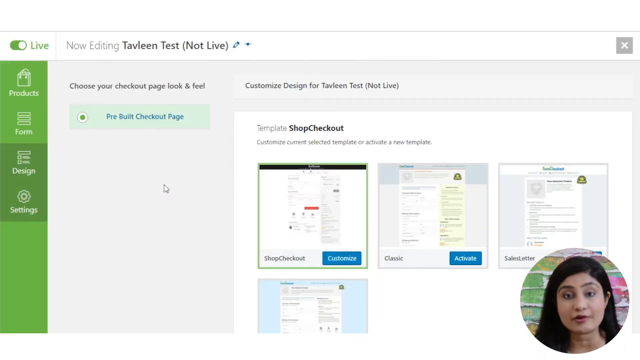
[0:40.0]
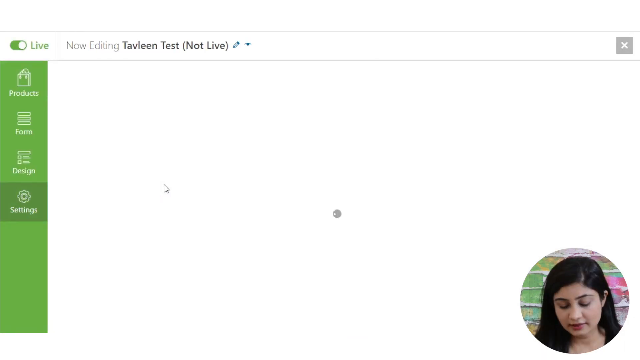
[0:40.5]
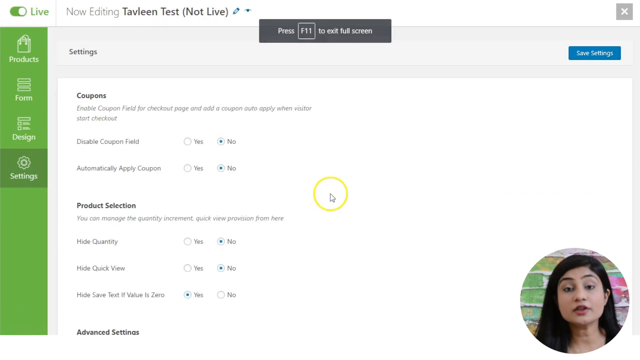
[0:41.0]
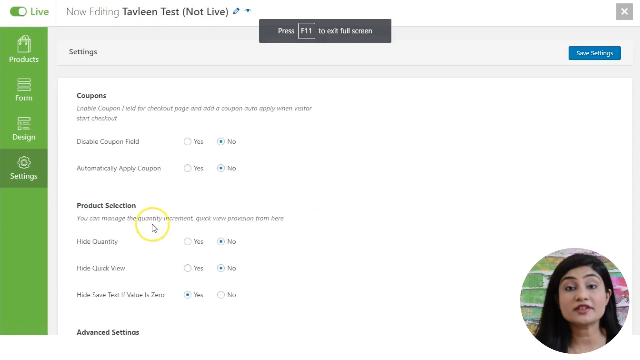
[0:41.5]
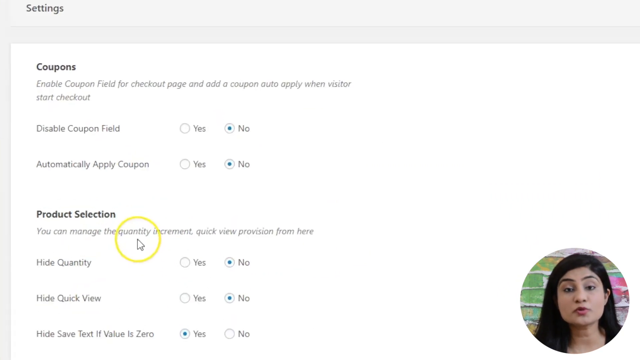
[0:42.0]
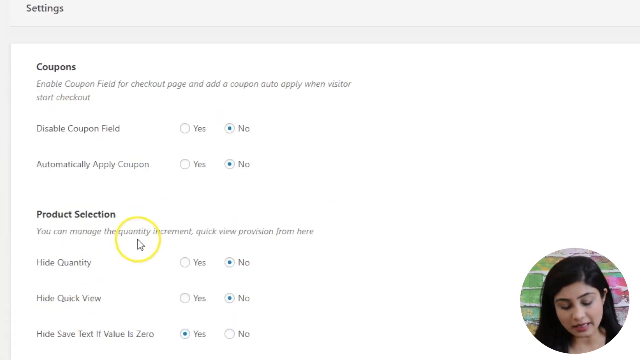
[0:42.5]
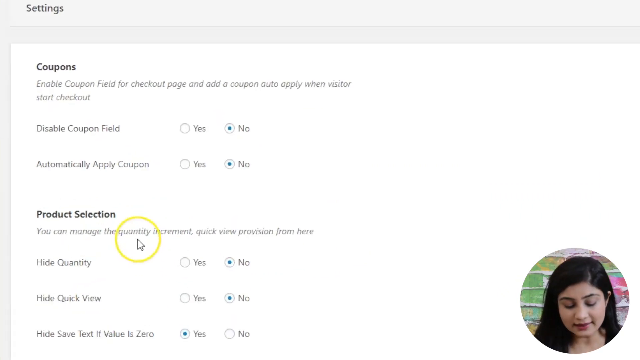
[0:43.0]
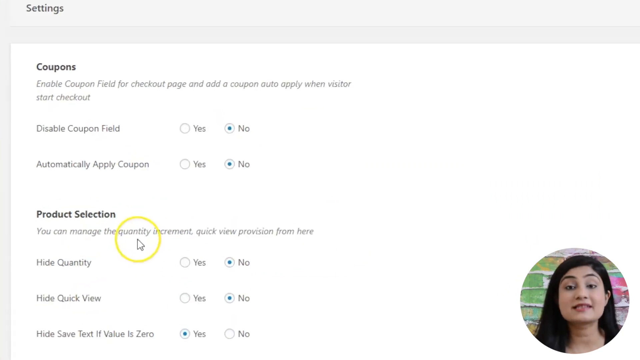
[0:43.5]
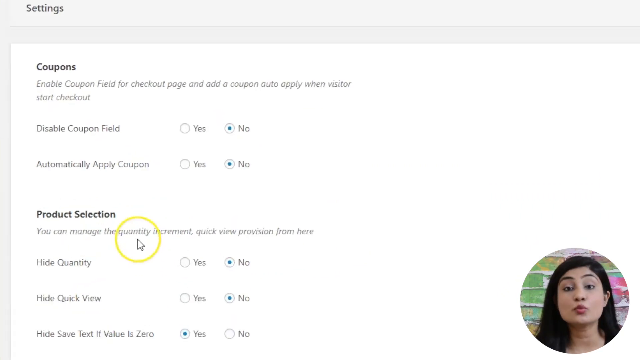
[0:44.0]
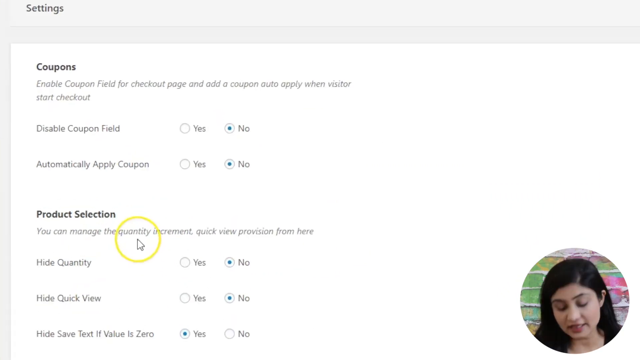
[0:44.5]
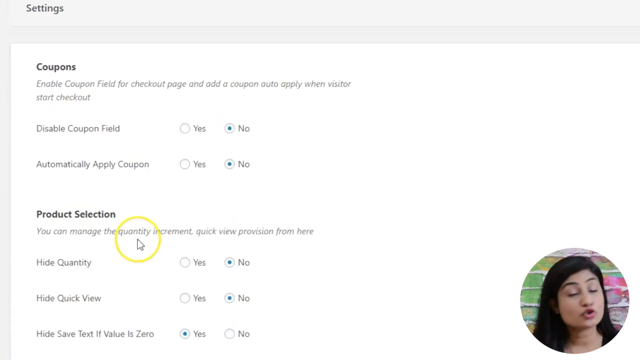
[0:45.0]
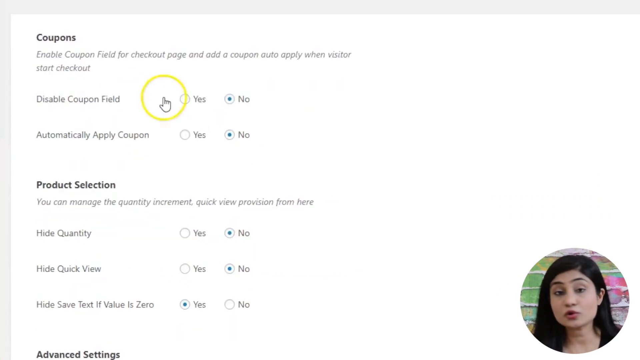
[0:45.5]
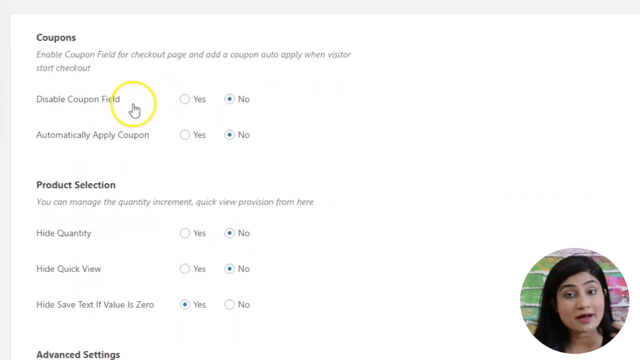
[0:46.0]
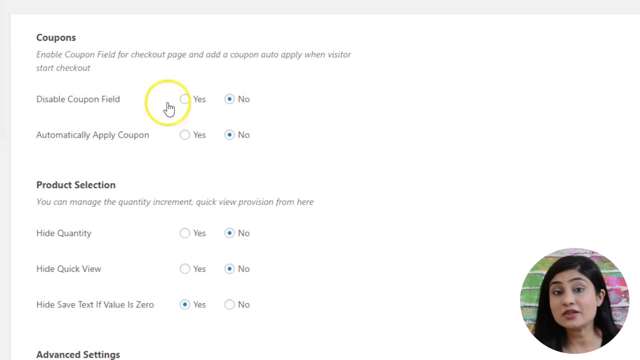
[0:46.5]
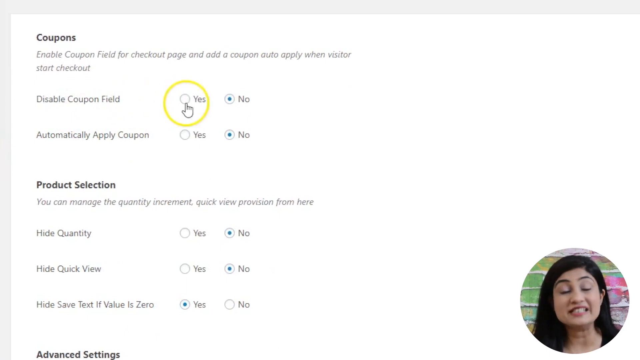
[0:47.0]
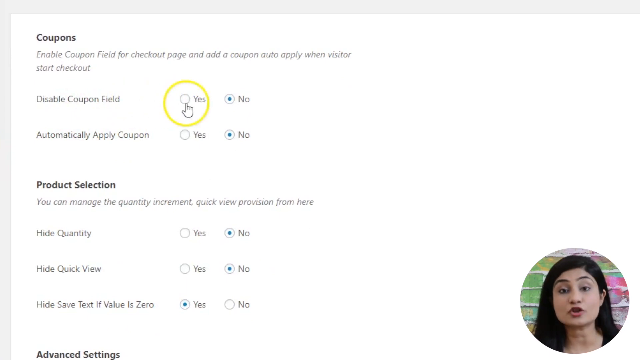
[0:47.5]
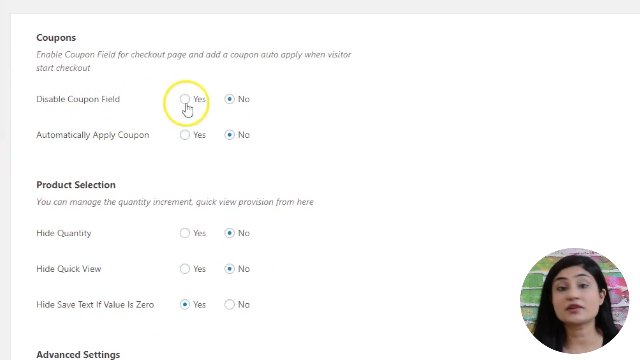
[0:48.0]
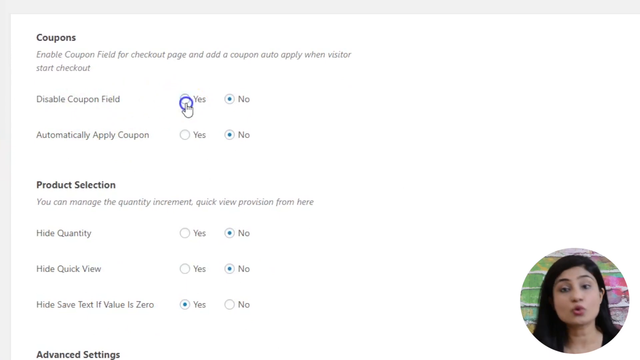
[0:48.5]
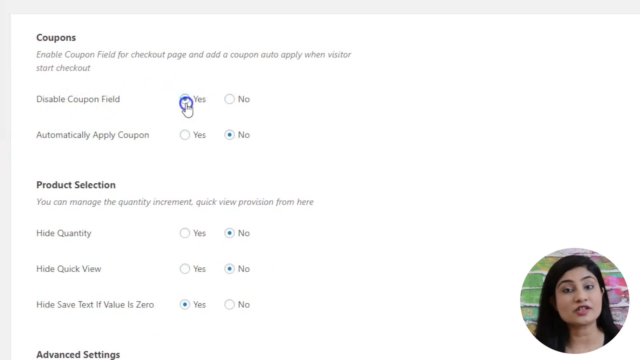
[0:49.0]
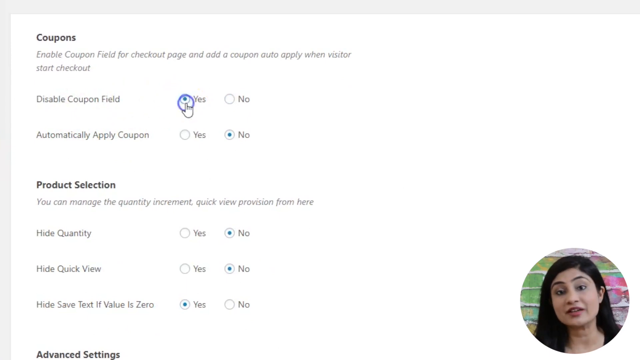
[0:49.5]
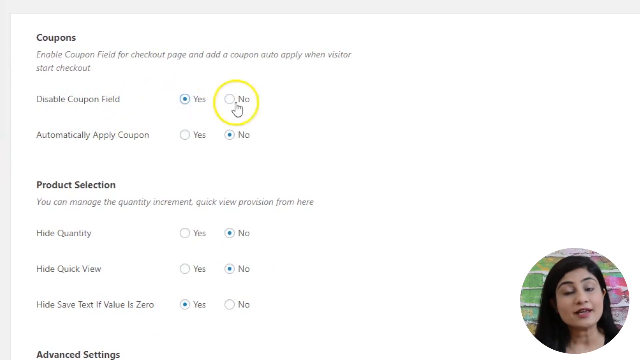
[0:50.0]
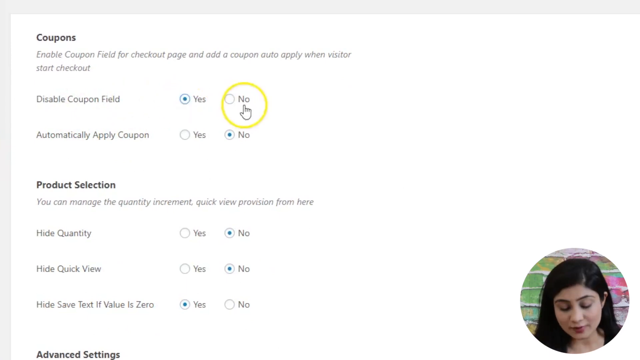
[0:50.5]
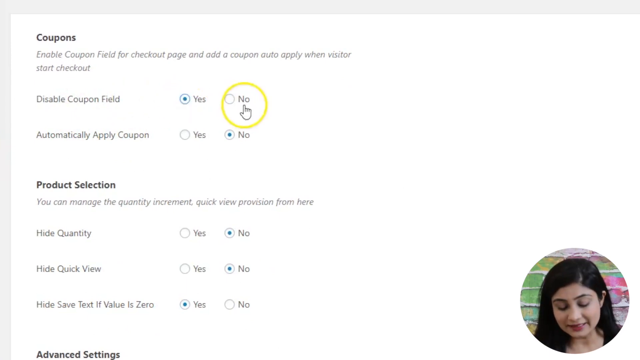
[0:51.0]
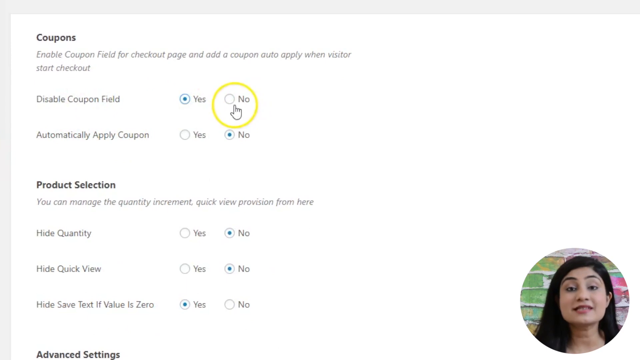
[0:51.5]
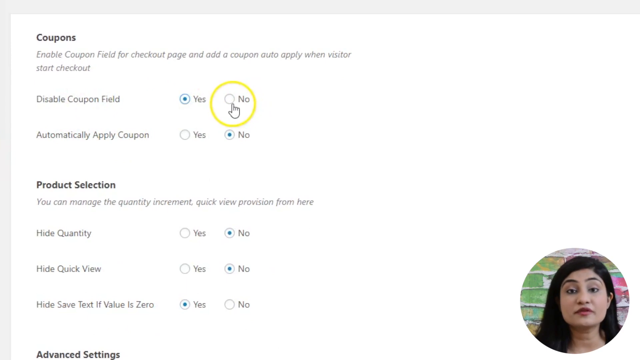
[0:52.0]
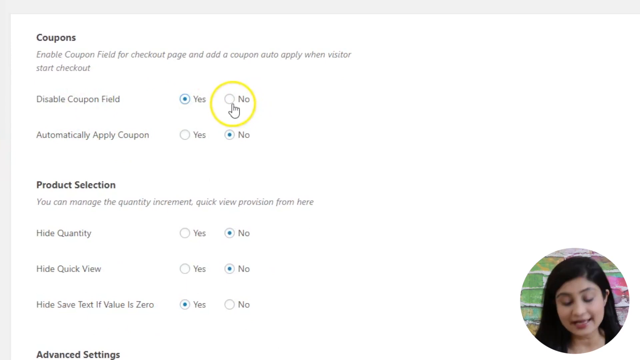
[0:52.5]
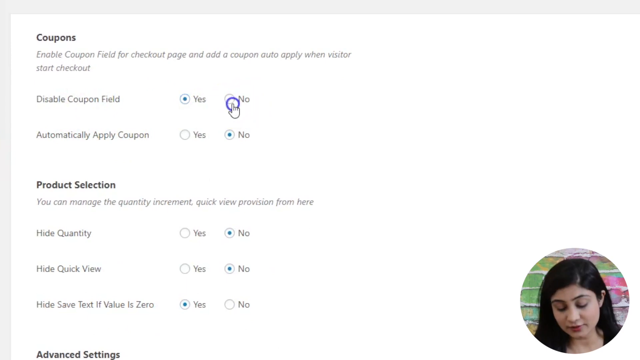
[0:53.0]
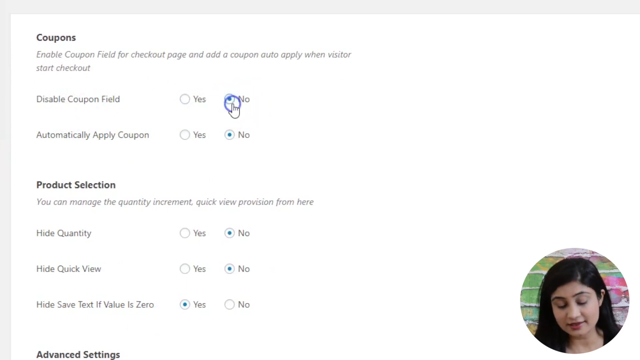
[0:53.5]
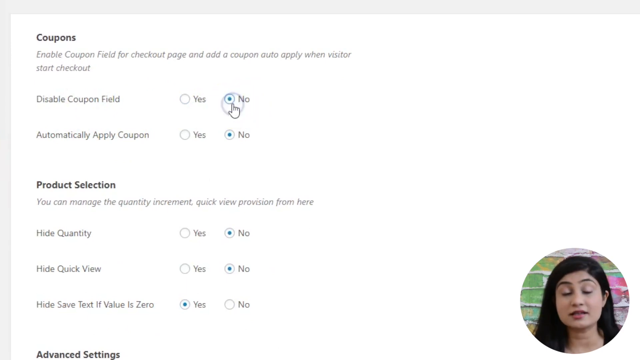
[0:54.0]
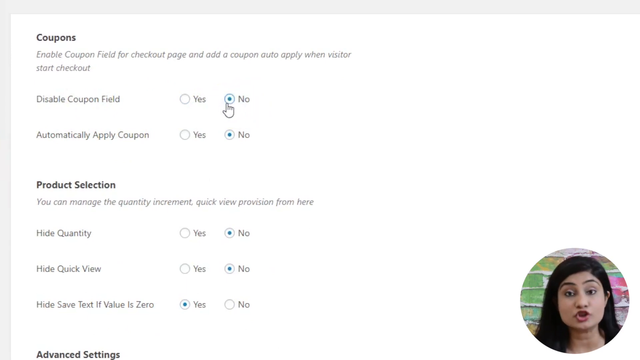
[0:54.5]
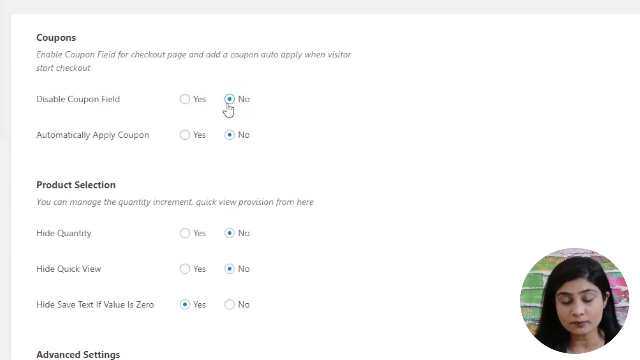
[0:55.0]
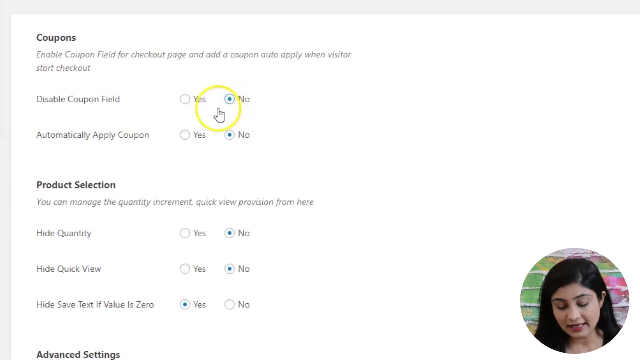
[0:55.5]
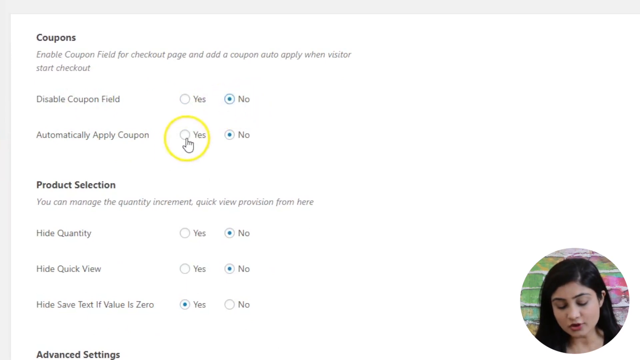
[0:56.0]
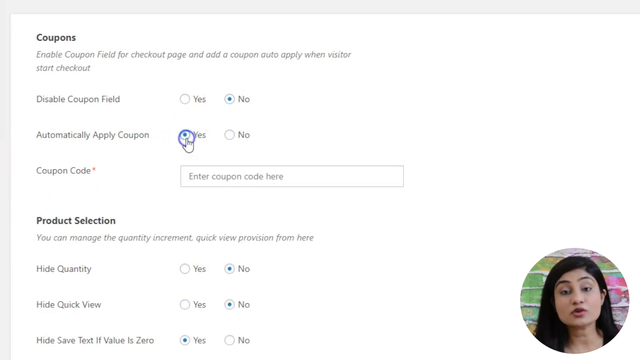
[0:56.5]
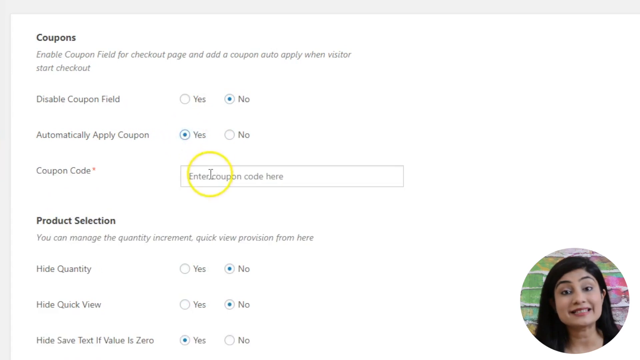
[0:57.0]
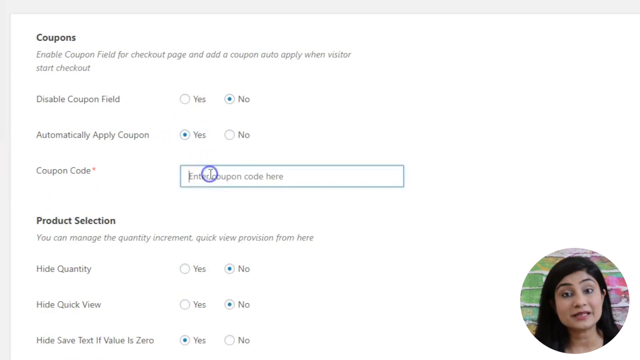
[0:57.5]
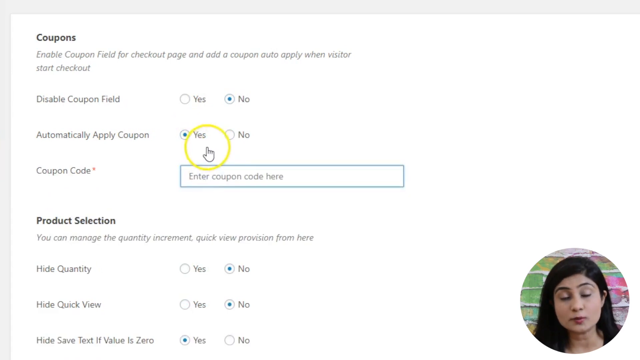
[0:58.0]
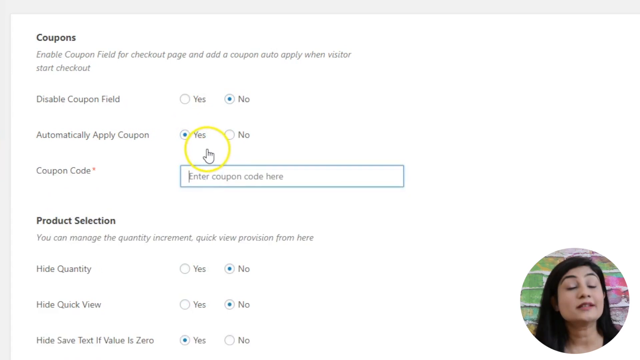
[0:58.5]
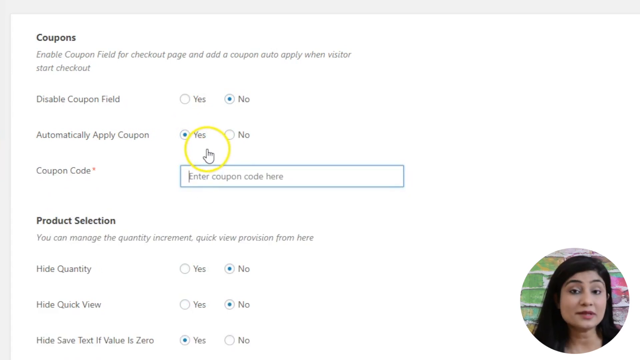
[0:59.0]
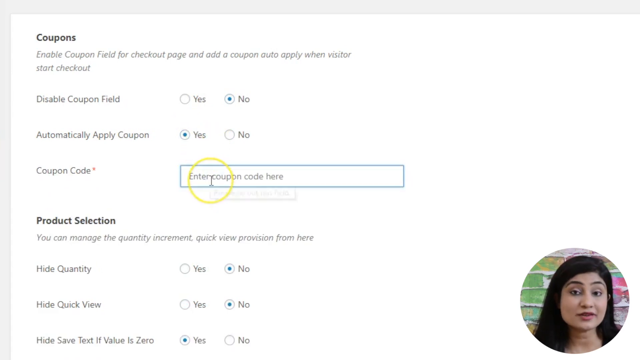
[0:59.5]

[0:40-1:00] Several screens are pulled up in the background, with a green label on the left side holding different options. The main screen reads "settings" and shows various options. Someone appears to be going over the options with a white arrow pointer surrounded by a yellow circle, and the view zooms into the different options. In the lower right corner is a circle with a woman speaking into the camera. The user goes over the options, clicks the buttons to show how they work, and switches between the different options on the screen.